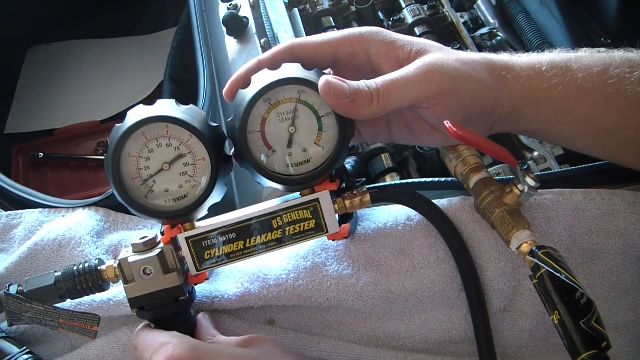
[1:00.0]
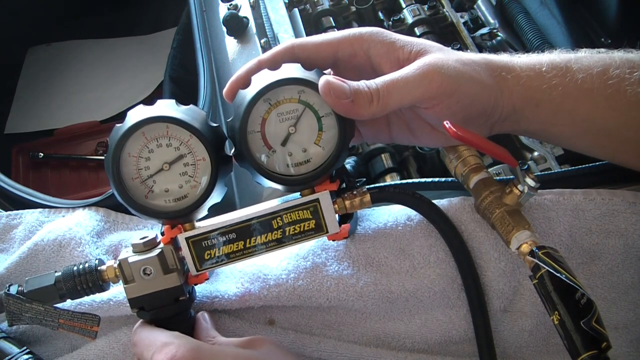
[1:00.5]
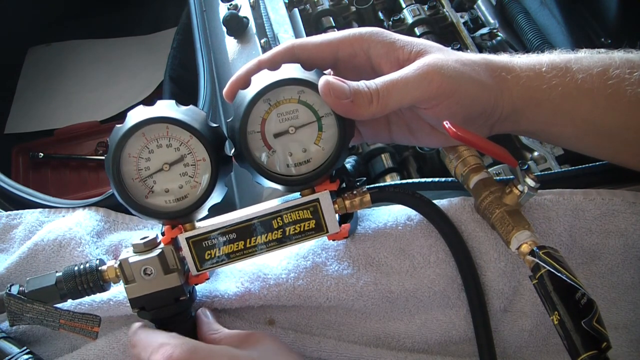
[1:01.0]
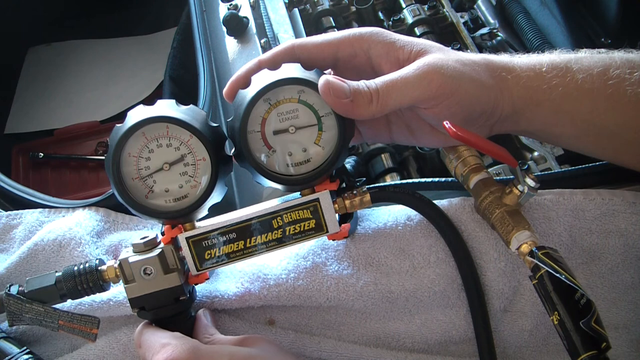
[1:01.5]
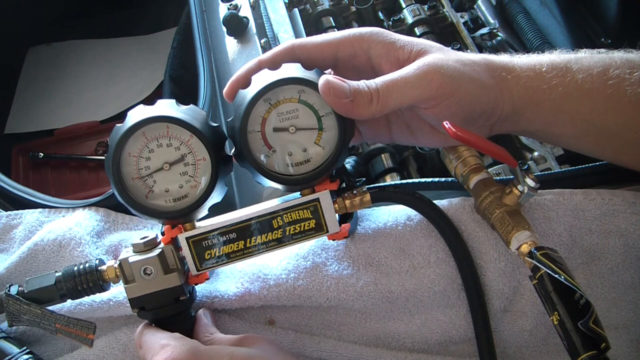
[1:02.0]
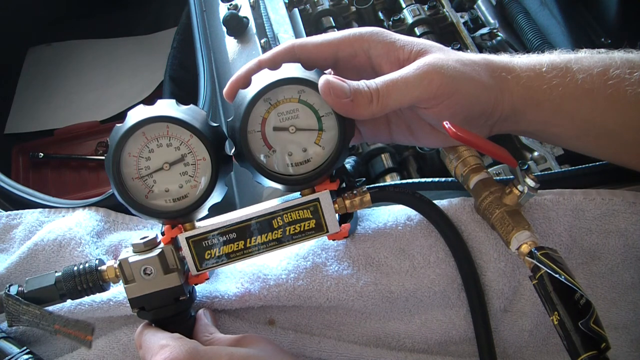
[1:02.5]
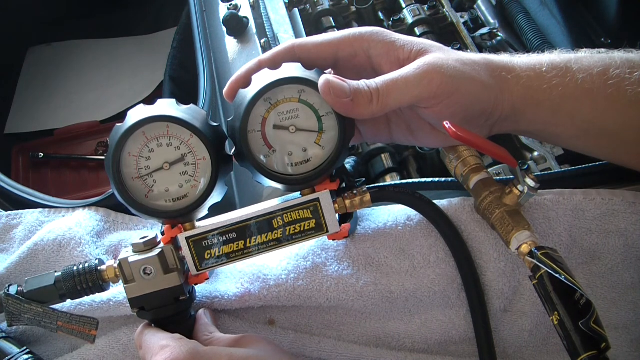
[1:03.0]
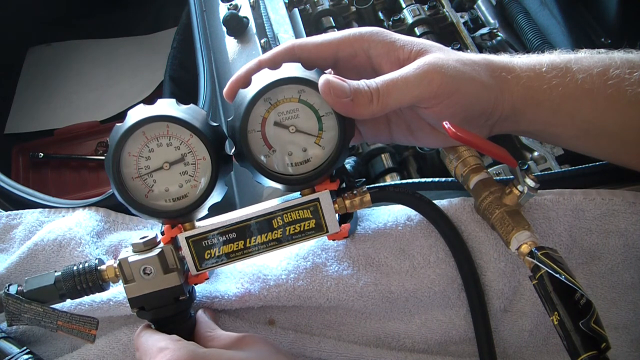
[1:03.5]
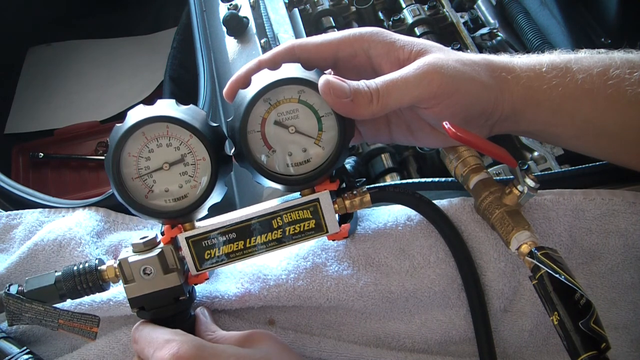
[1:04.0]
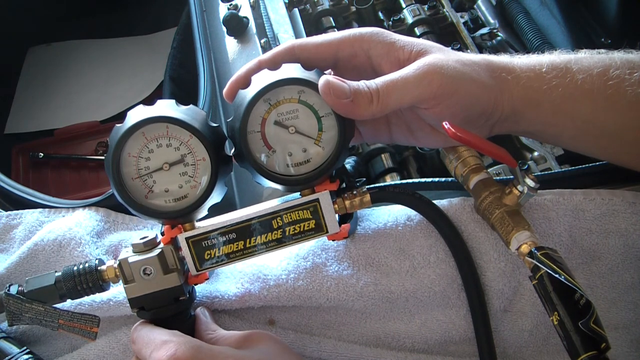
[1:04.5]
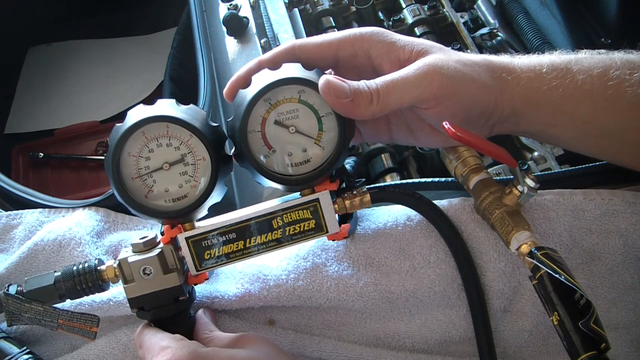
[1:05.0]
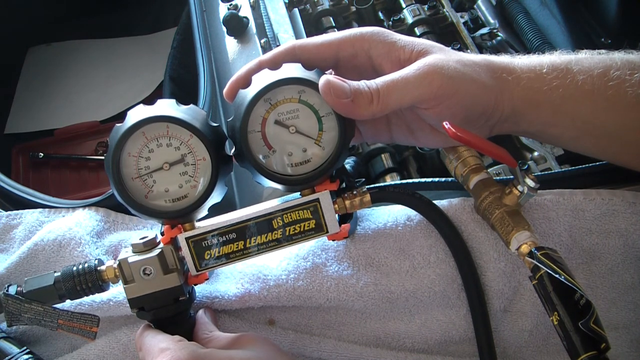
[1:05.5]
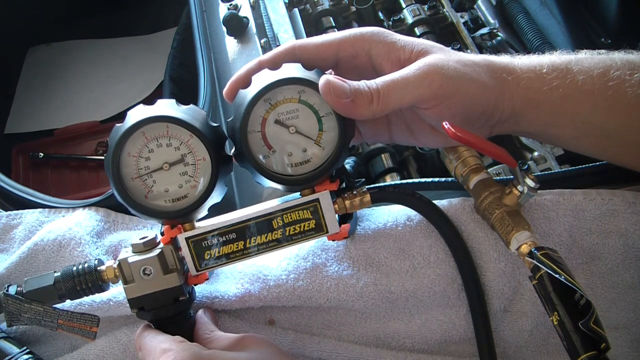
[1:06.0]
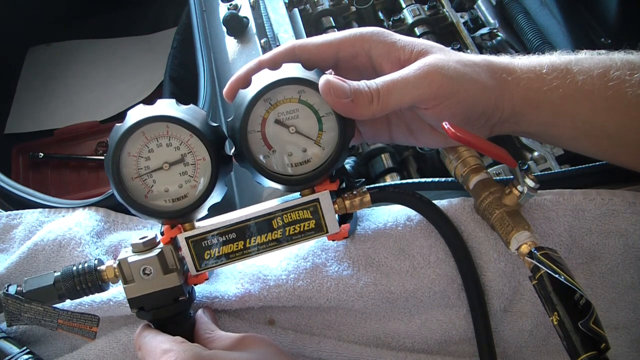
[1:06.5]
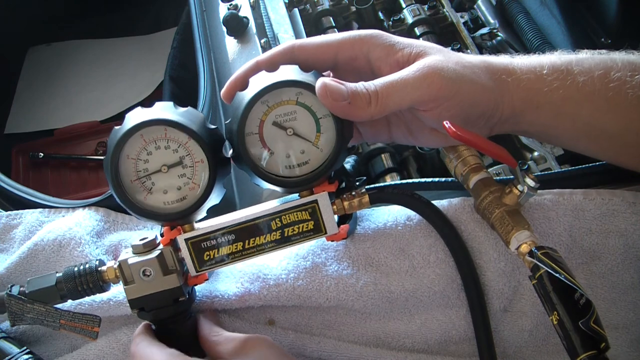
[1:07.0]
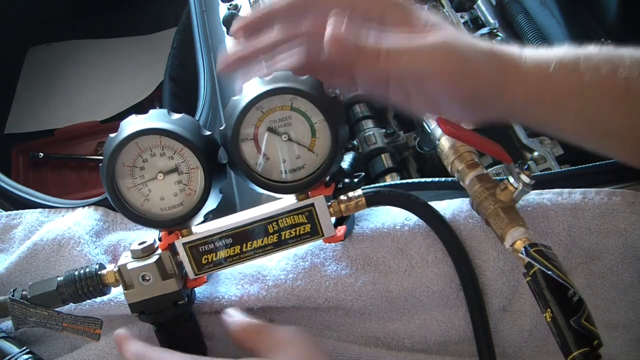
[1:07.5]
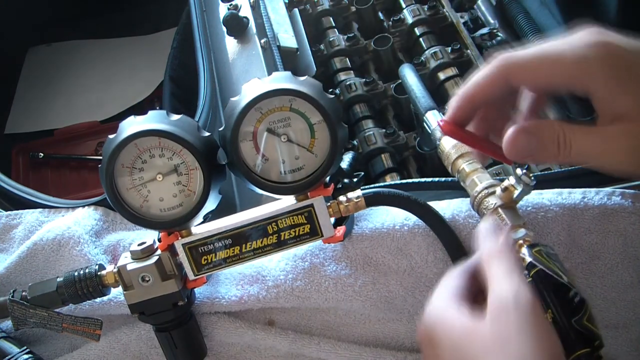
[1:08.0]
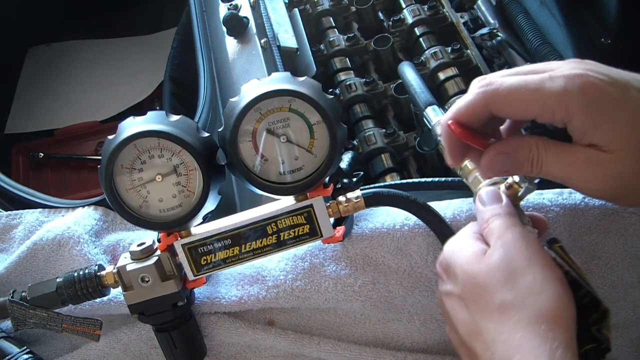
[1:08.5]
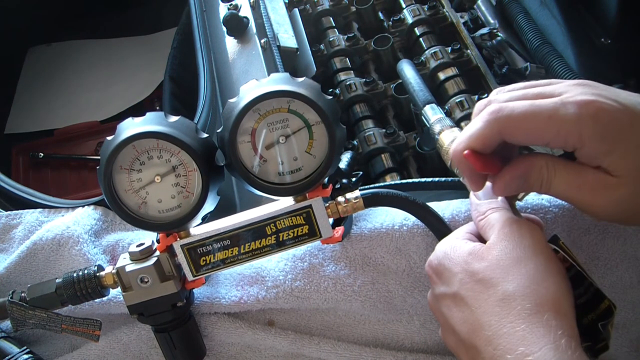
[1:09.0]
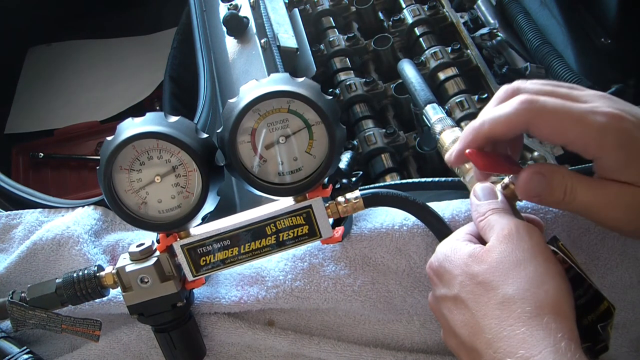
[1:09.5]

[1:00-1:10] An up-close view shows a leakage tester: two gauges connected to a small silver box. On the front of the box is a black label with "U.S. General Cylinder Leakage Tester" written in yellow. A black hose goes off the left side of the box and another black hose goes off the right side. Beside it is the end of the hose, connected to a red handle. Someone's right hand, visible only to the wrist, holds the gauge on the right of the two gauges, and the needle inside it slowly moves up. He then grabs the red handle and pushes it down, and the needle on the second gauge goes down.